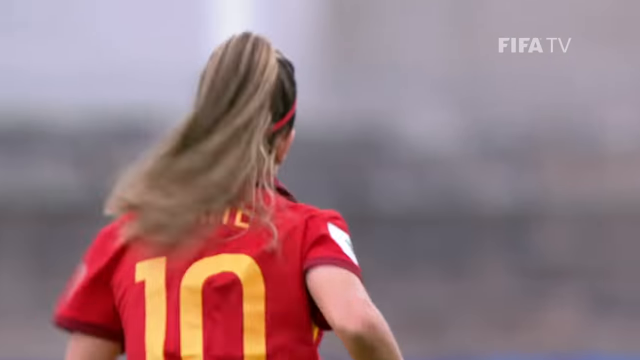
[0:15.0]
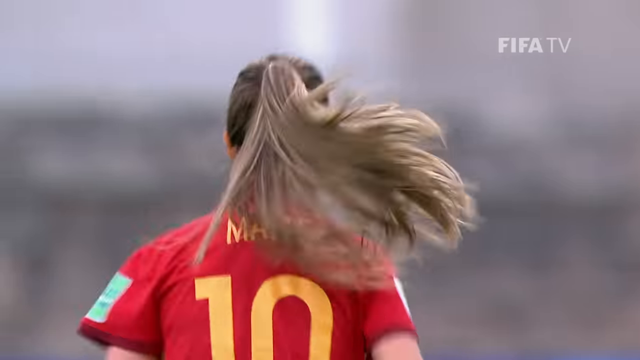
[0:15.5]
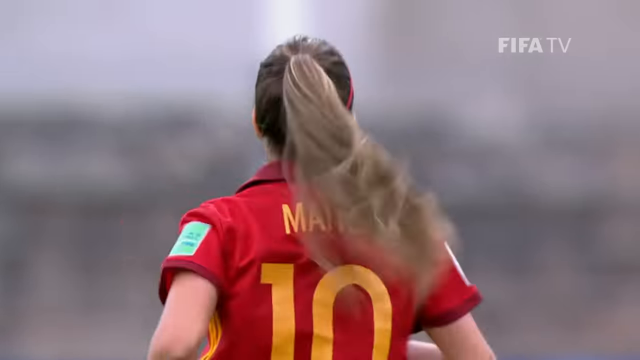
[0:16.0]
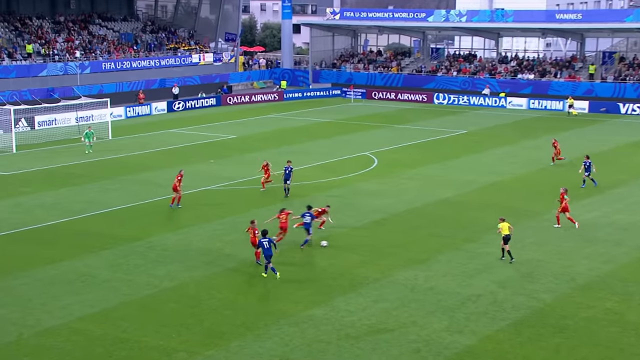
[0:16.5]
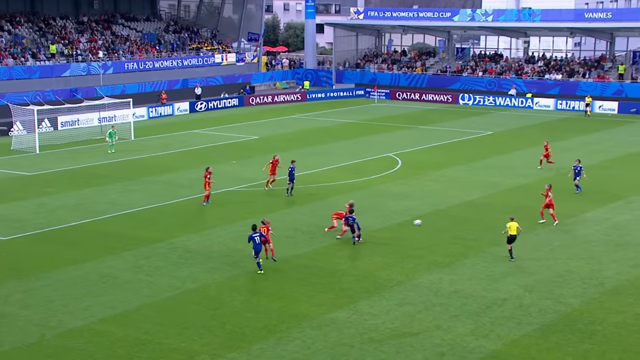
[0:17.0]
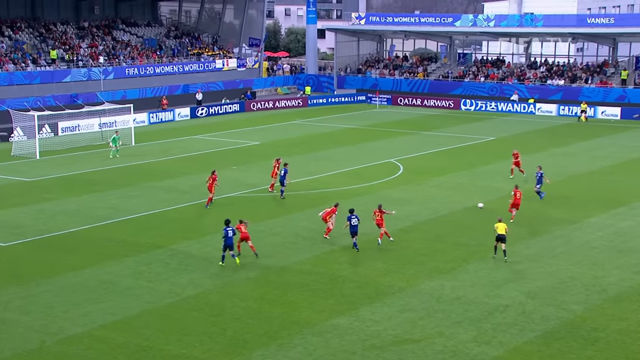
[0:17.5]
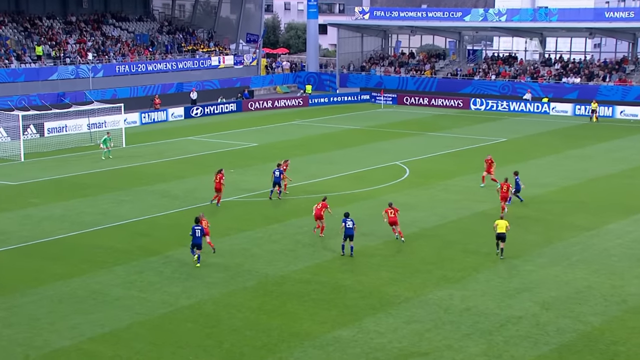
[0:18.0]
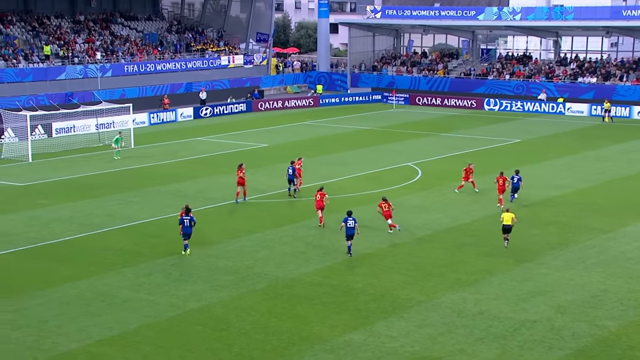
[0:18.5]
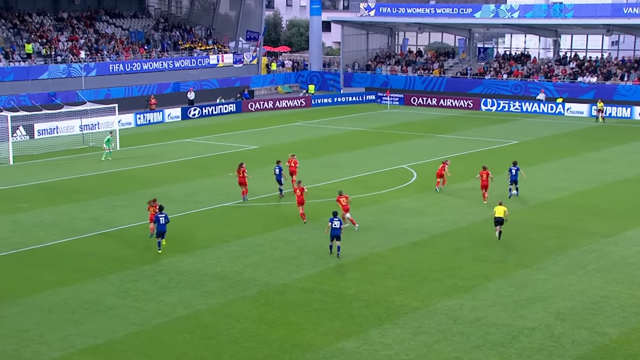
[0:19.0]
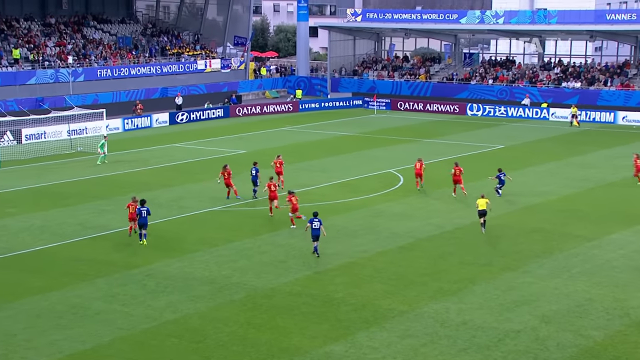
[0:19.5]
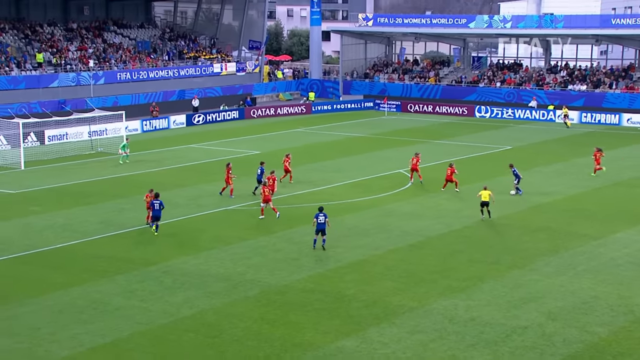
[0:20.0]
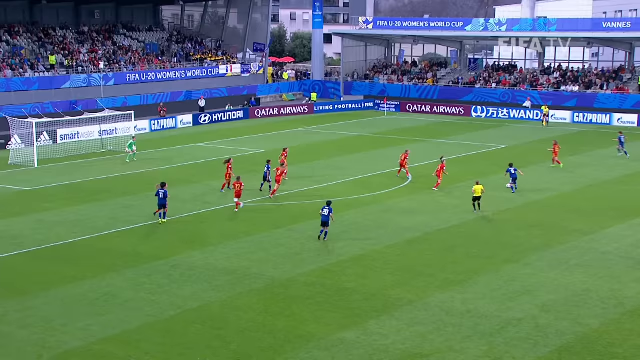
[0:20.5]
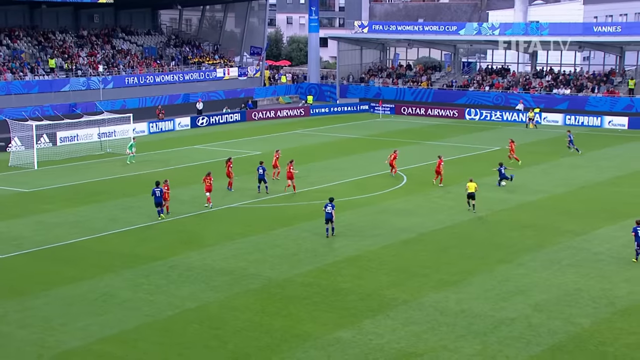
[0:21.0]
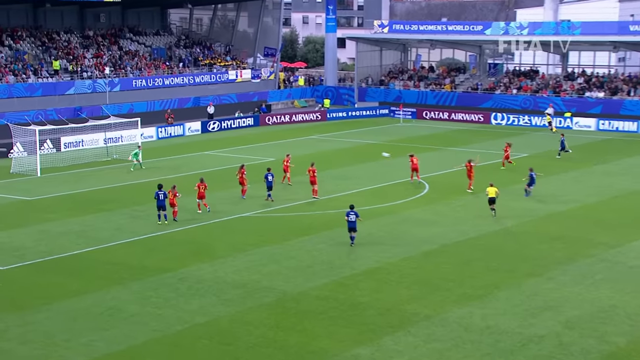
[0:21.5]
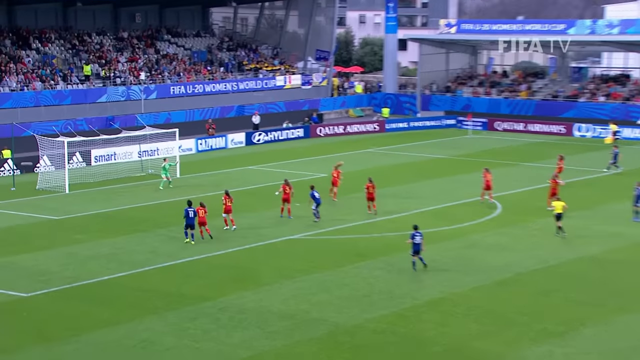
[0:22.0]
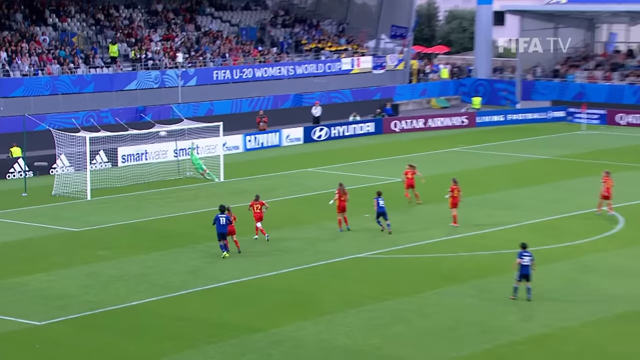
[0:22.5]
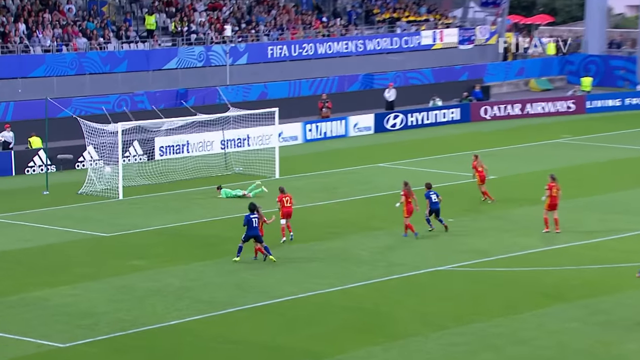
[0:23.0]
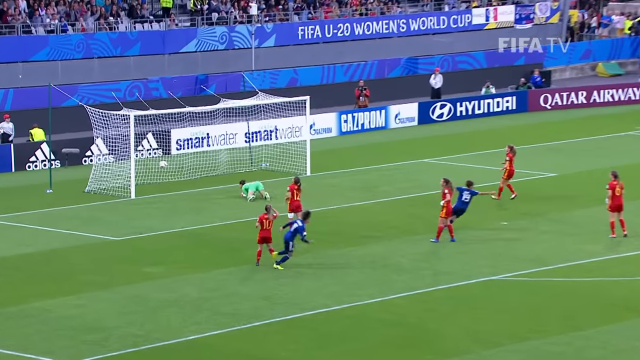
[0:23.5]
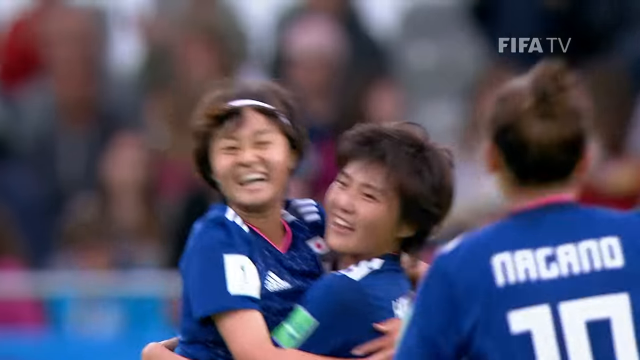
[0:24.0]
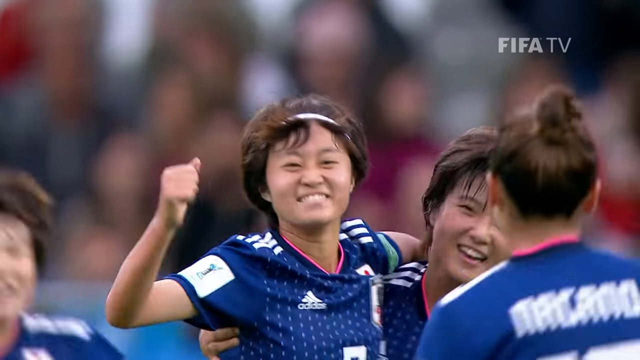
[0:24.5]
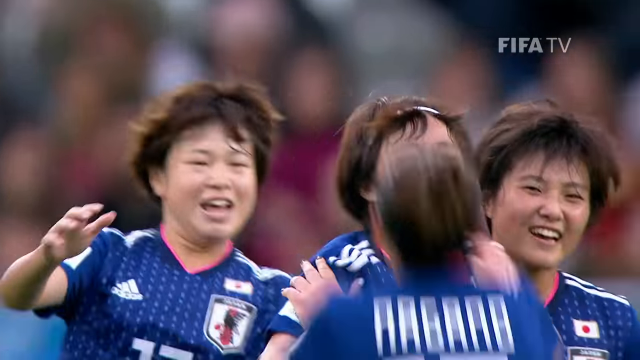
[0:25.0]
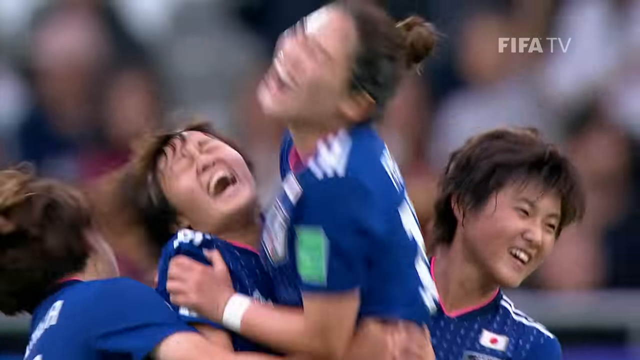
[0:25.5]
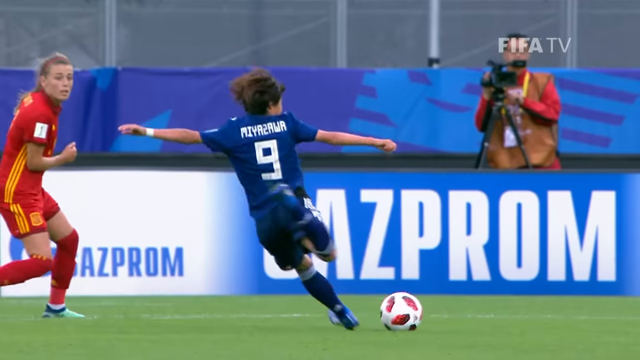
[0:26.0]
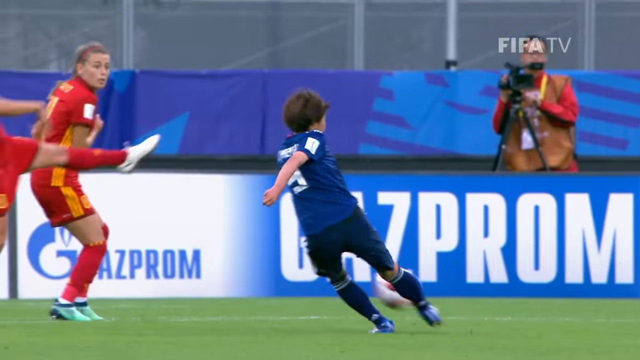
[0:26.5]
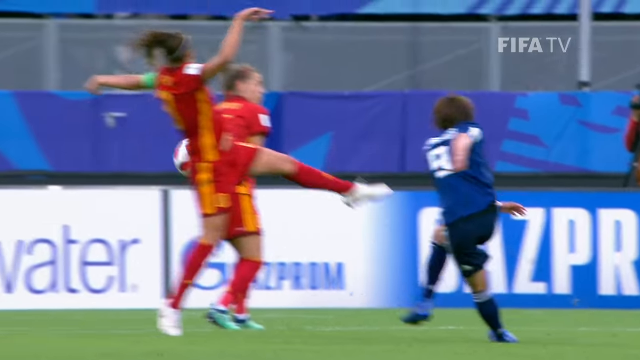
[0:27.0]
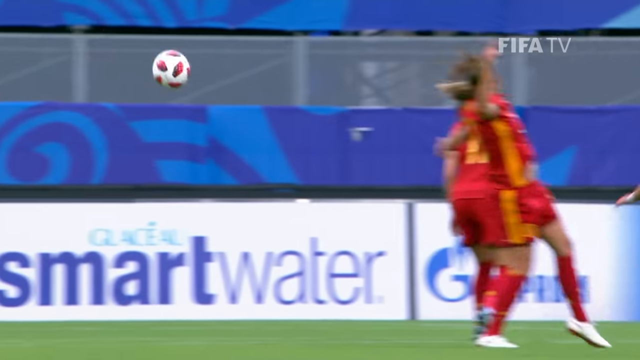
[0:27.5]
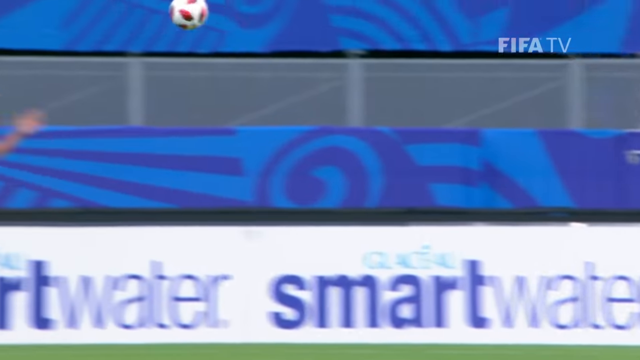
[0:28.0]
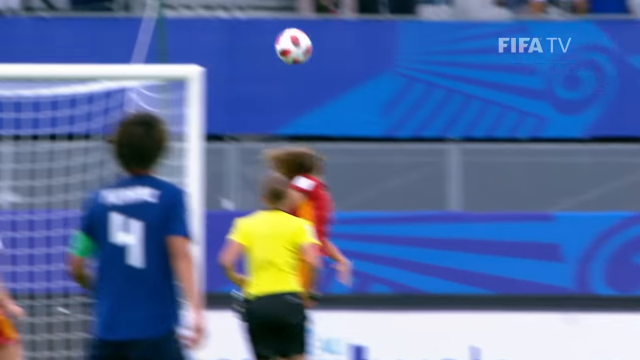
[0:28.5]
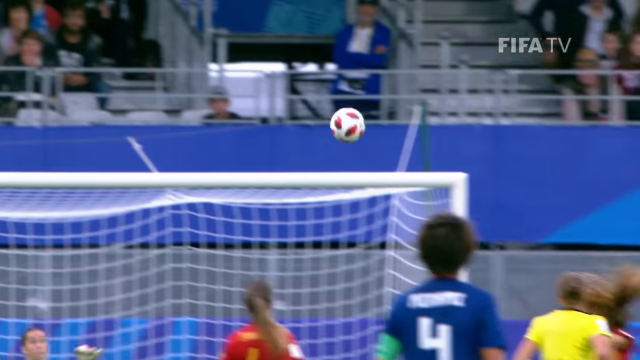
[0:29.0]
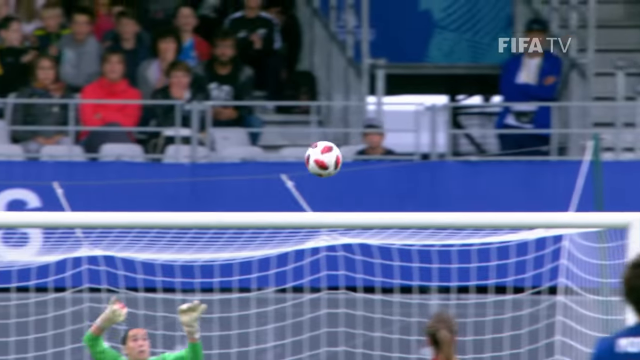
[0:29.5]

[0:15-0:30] A highlight reel of the 2018 FIFA U-20 Women's World Cup, Japan versus Spain, shows the scoring and the close misses, with the camera almost always on the players. At the beginning there is a look into the crowd at a man who waves or winks at the screen. The stadium is kind of small. The final score is Japan 3, Spain 1. Japan plays in blue uniforms and Spain in red uniforms. At the end the Japanese players are jumping up and down all together as confetti comes down from the sky.